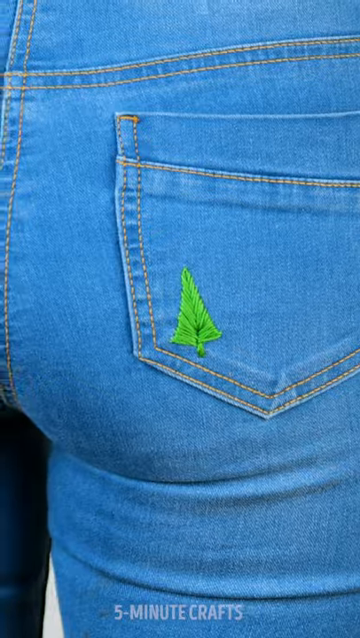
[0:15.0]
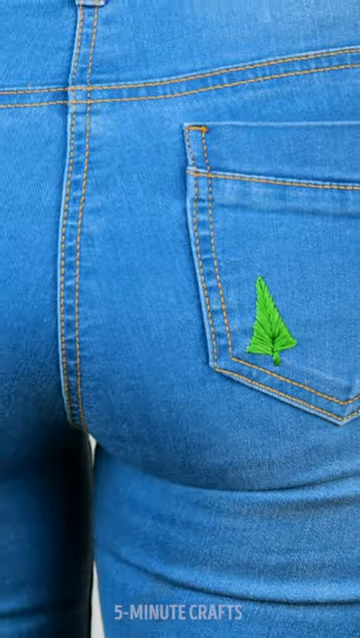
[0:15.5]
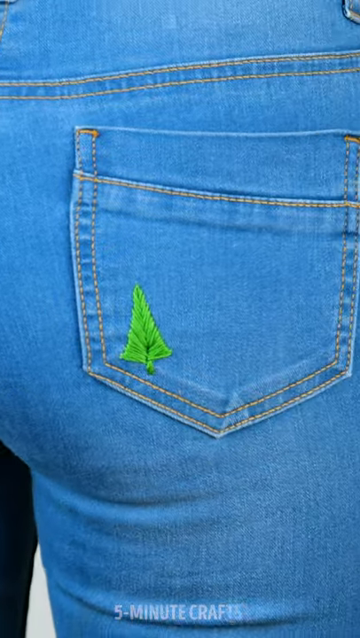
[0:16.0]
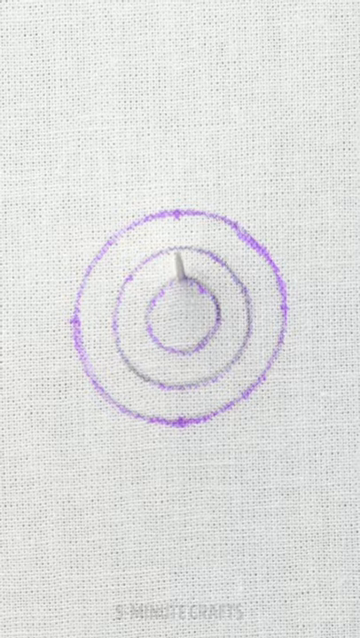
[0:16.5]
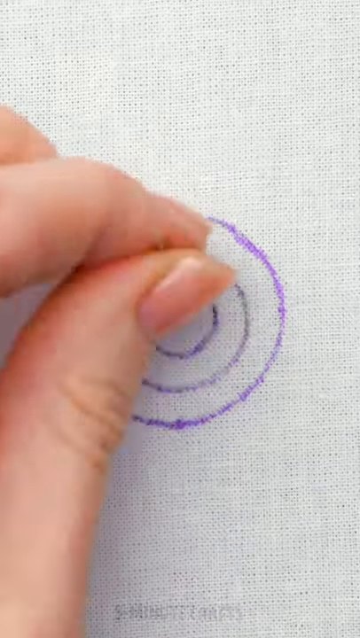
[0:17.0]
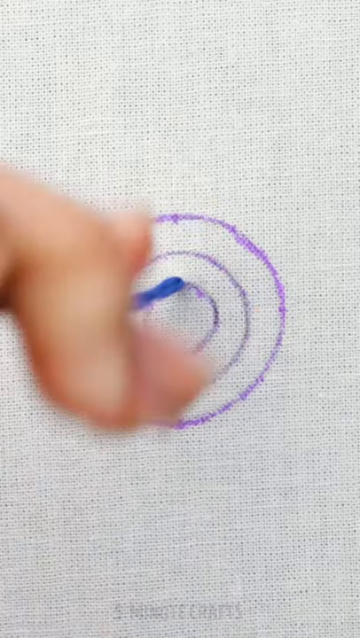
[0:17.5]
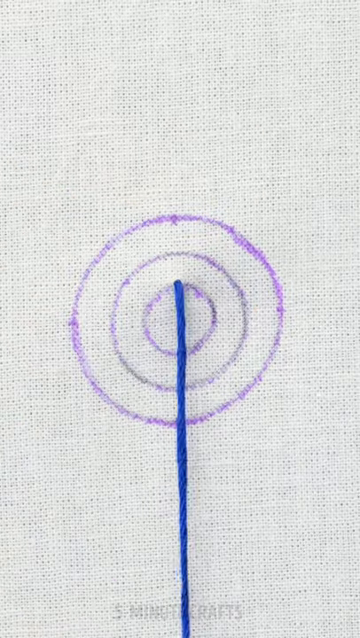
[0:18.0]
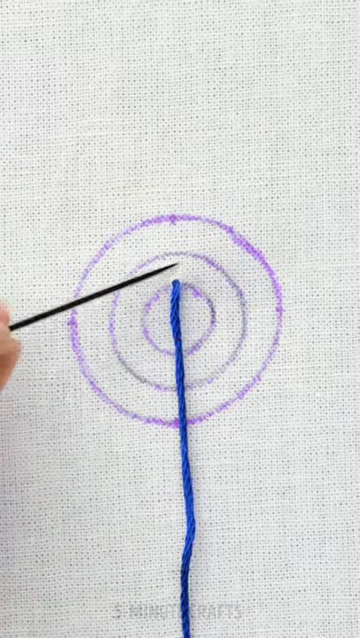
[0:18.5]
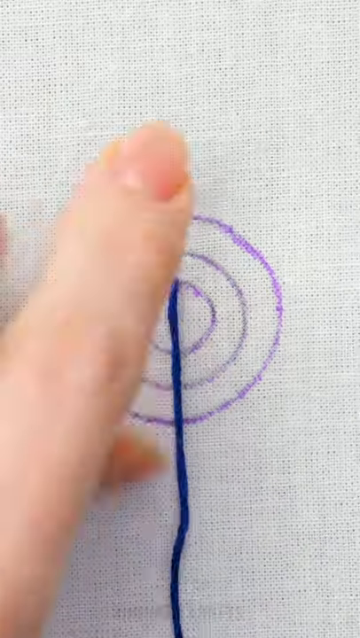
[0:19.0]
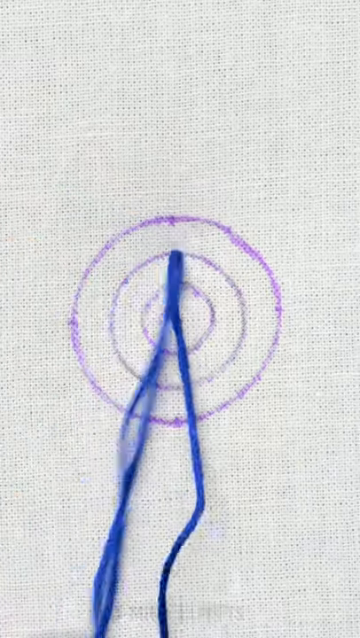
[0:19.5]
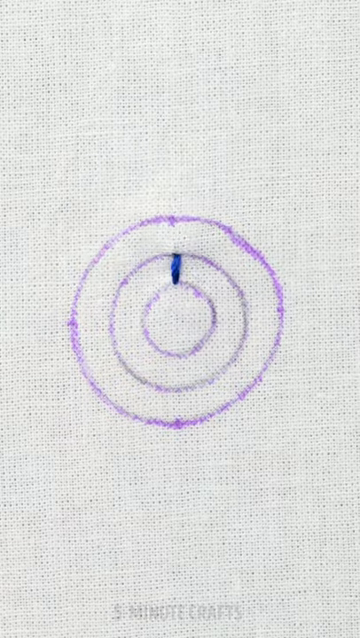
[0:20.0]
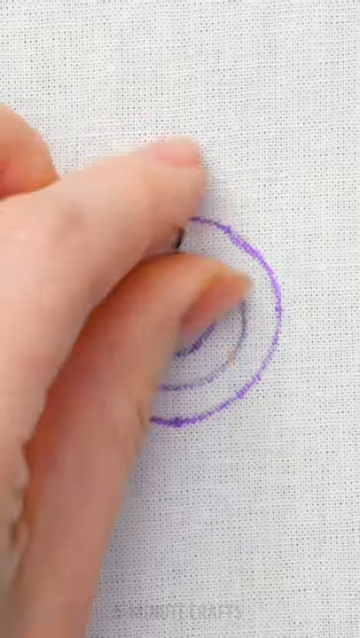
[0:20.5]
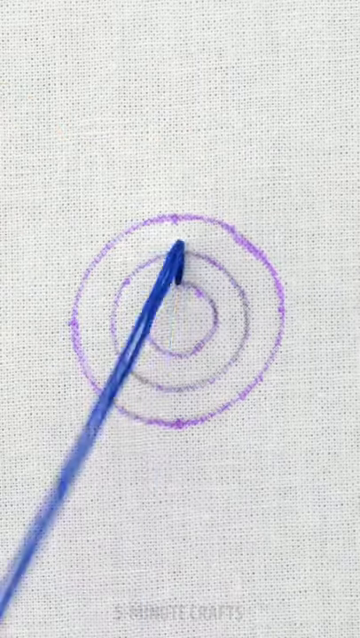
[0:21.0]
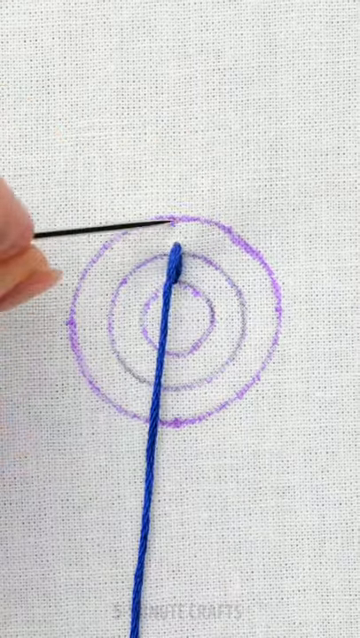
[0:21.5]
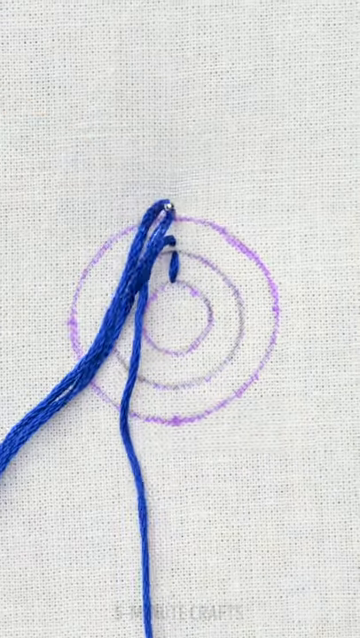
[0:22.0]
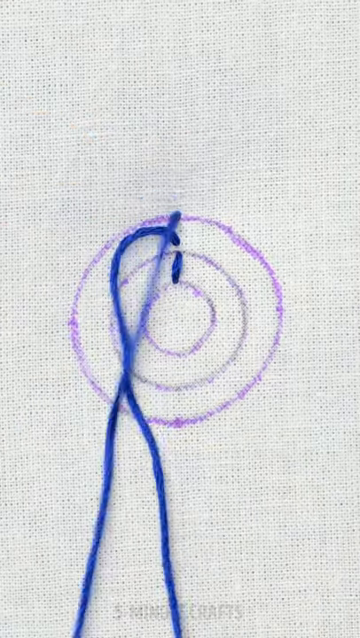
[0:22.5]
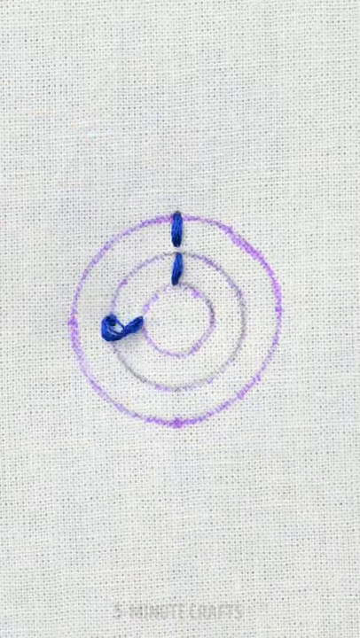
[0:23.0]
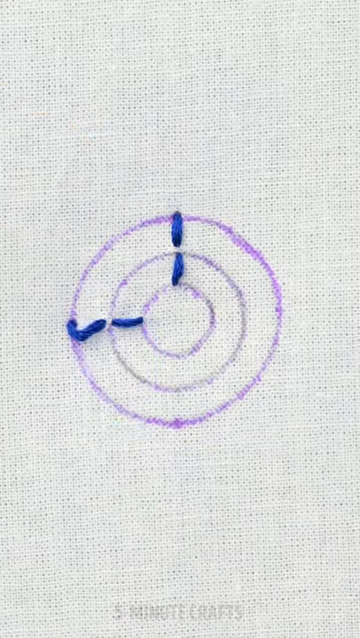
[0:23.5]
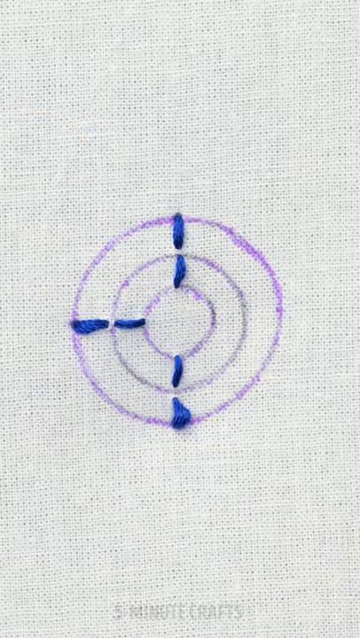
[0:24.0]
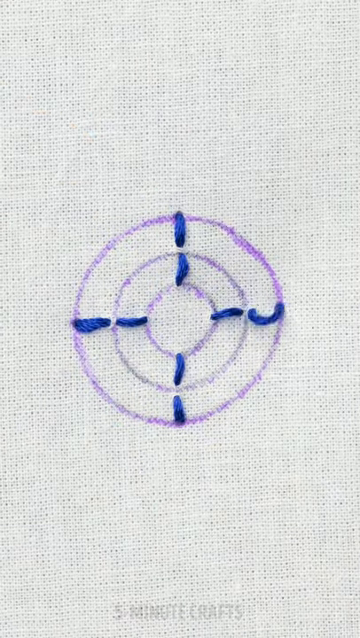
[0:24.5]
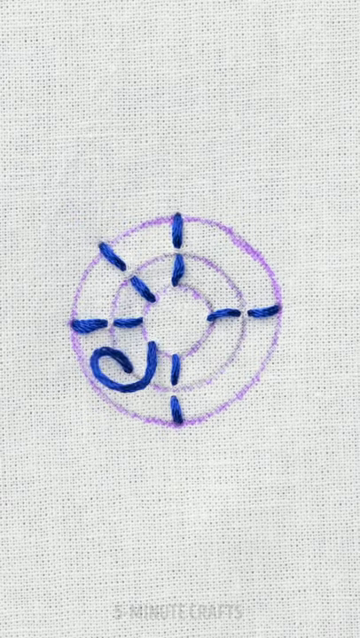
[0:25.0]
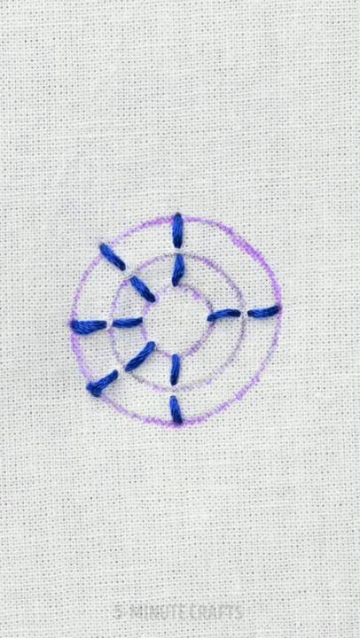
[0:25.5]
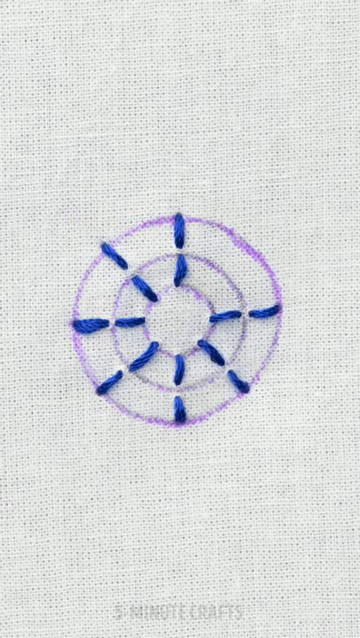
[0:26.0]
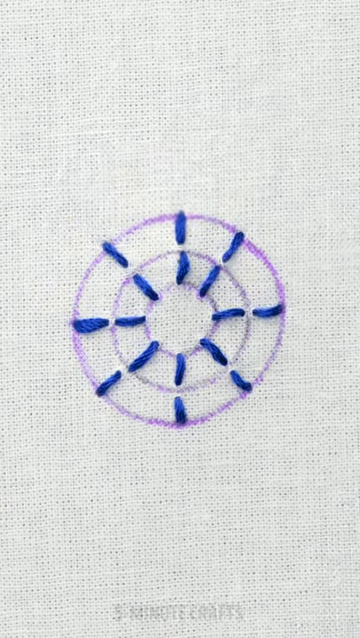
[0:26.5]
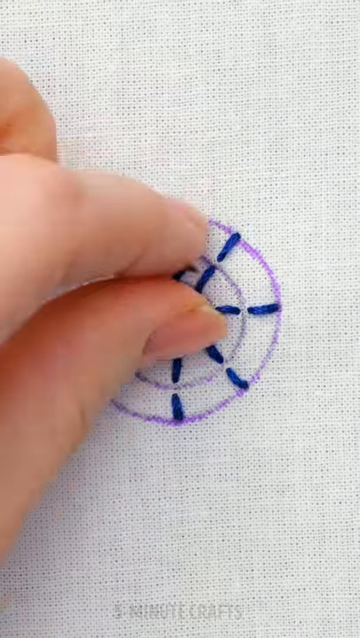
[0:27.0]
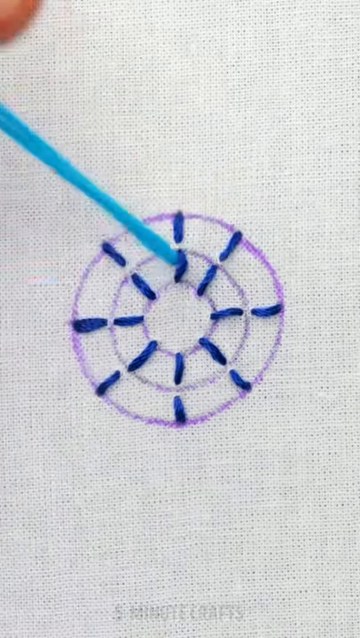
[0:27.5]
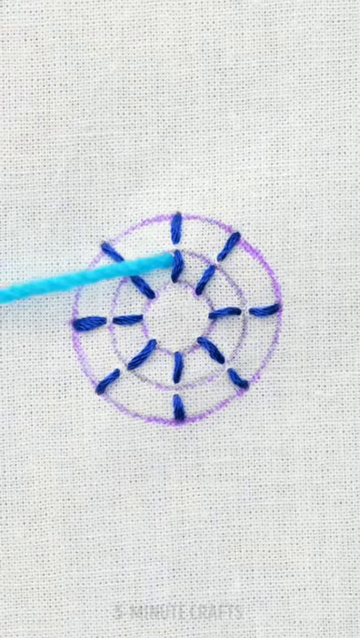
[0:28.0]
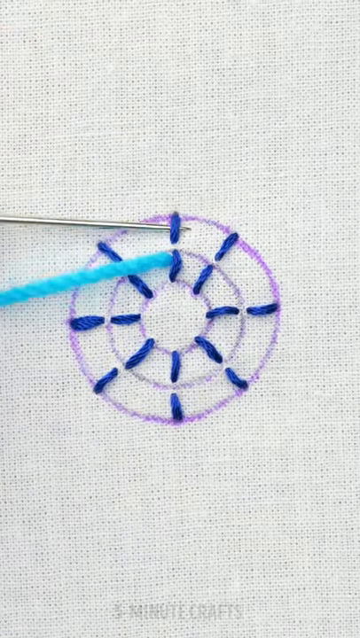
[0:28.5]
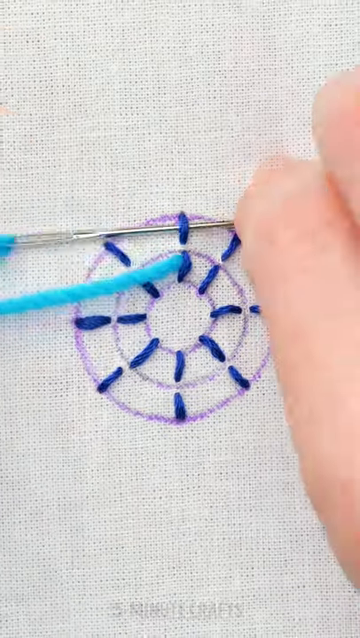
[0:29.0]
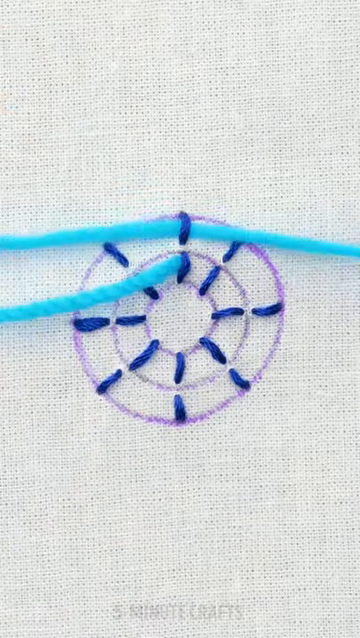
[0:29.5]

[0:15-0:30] A piece of white cloth shows a circle with two rings drawn around it. Someone takes medium blue embroidery thread and stitches from the edge of the innermost ring to the edge of the second ring, then to the line of the outside ring, making a design that breaks the circles into 8 pie-shaped pieces. They continue going around in pie sections, then take a lighter blue embroidery thread and start to weave it in and out of the darker blue stitches.